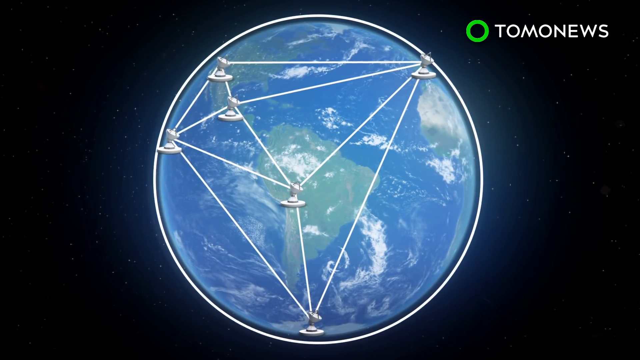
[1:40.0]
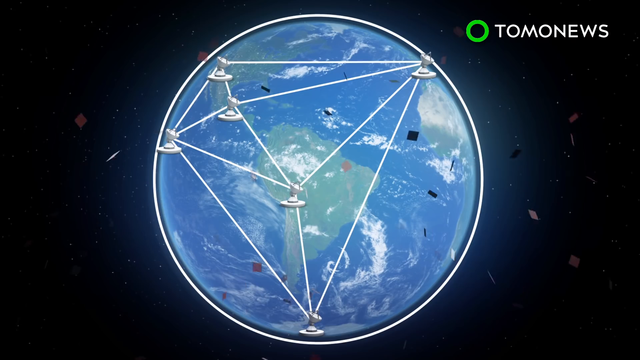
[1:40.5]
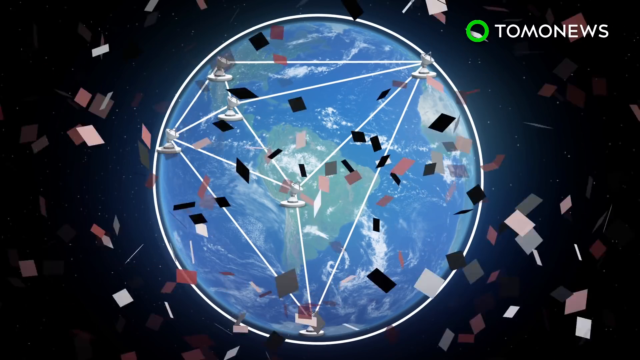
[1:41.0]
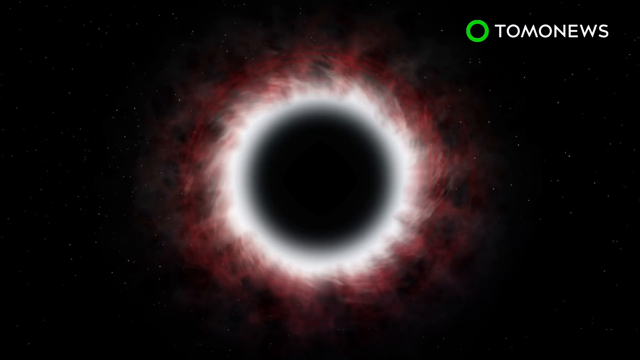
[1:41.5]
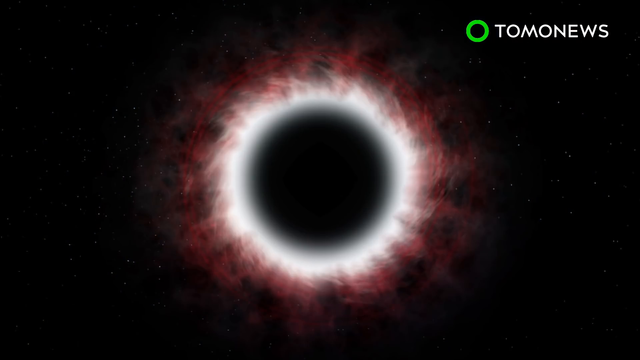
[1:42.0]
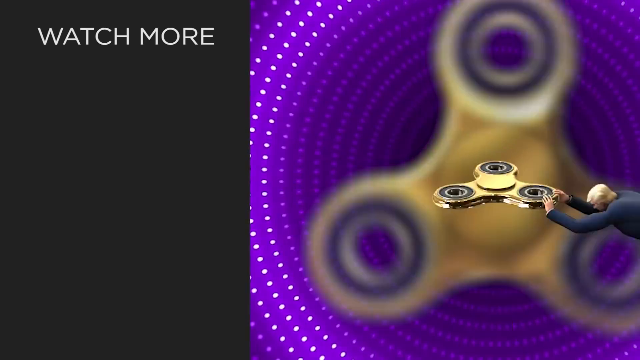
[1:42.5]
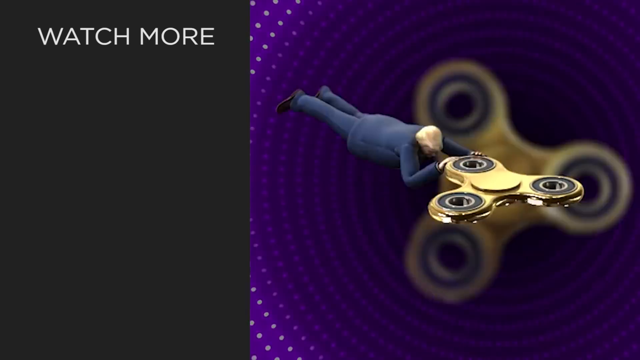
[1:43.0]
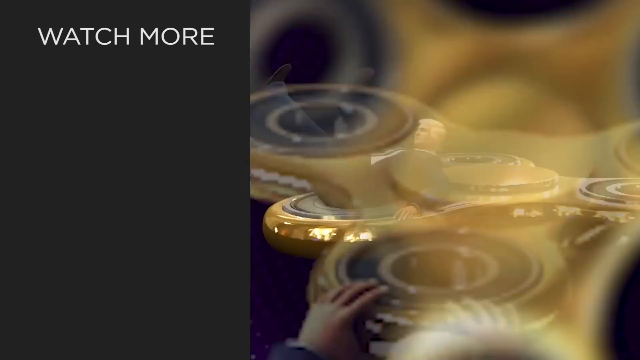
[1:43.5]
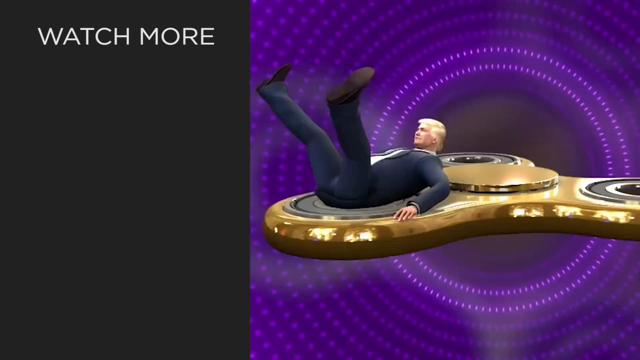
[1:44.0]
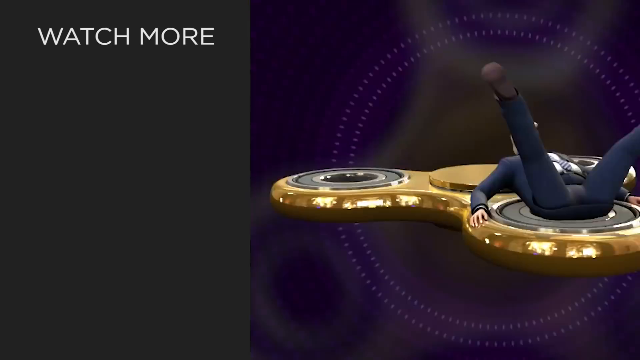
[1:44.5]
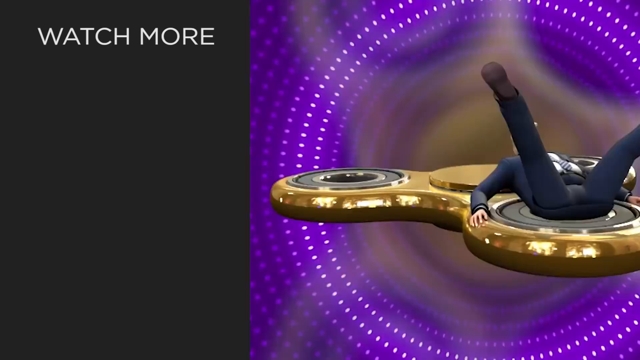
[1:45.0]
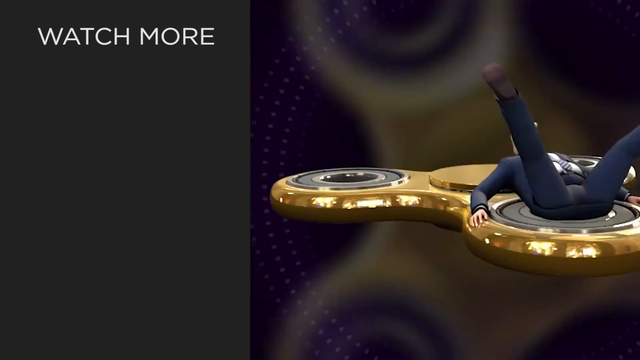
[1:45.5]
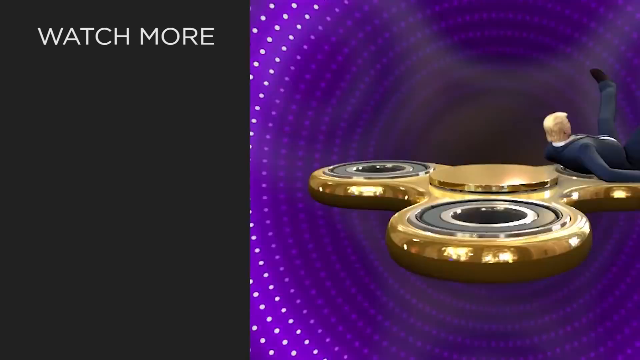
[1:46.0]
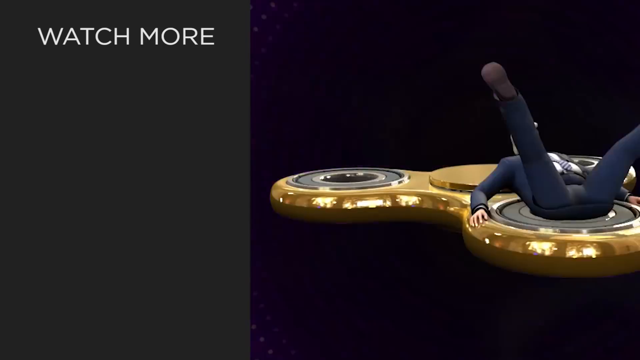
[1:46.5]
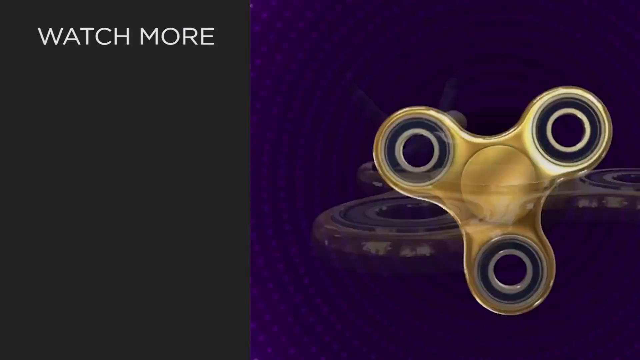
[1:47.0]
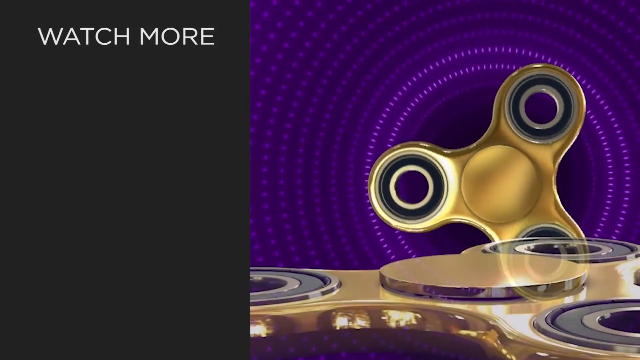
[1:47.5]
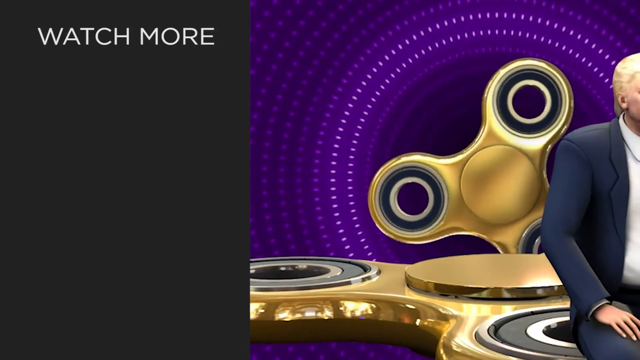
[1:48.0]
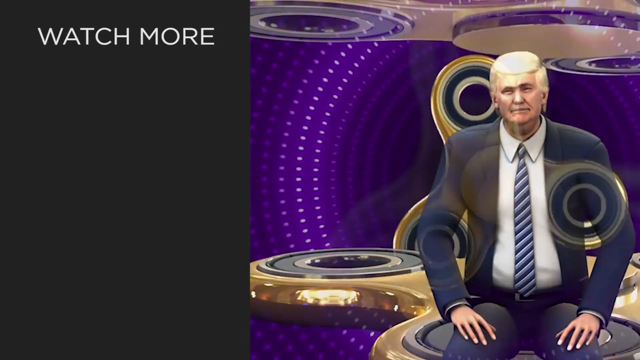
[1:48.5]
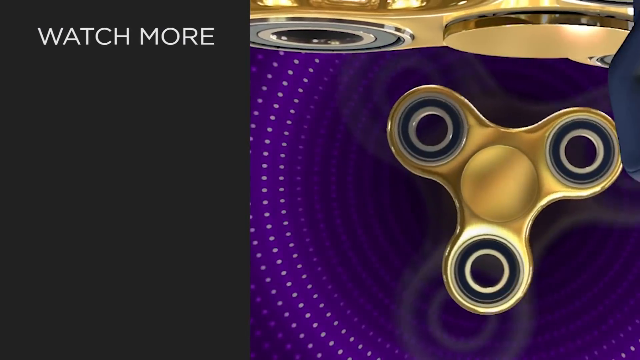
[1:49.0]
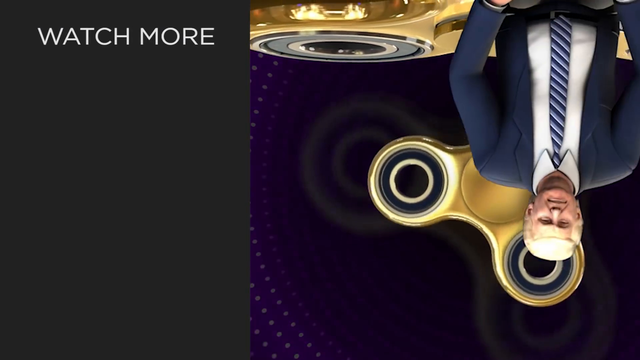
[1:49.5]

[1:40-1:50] Text reads "watch more". A man in a suit appears, changing places and turning upside down; he seems to be the one reporting on what is happening. The Earth is shown with many satellites, along with clouds.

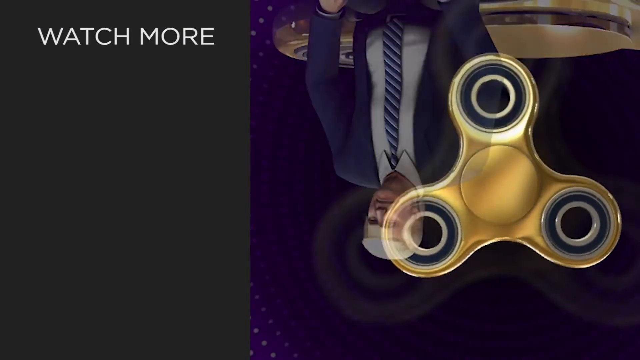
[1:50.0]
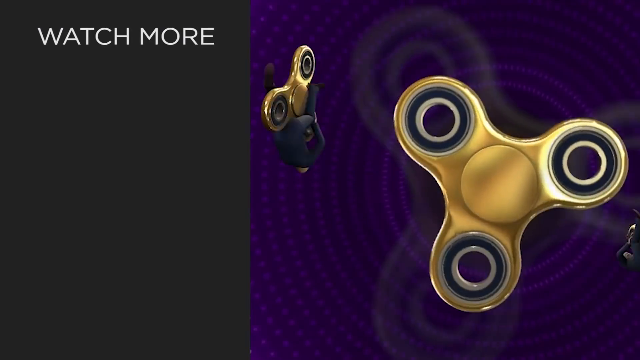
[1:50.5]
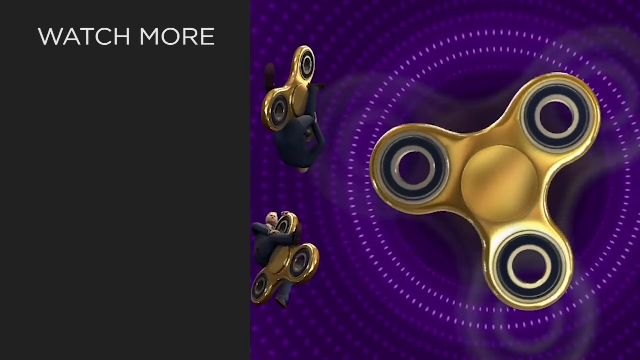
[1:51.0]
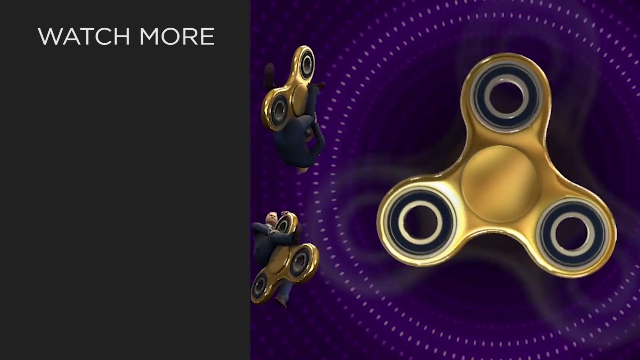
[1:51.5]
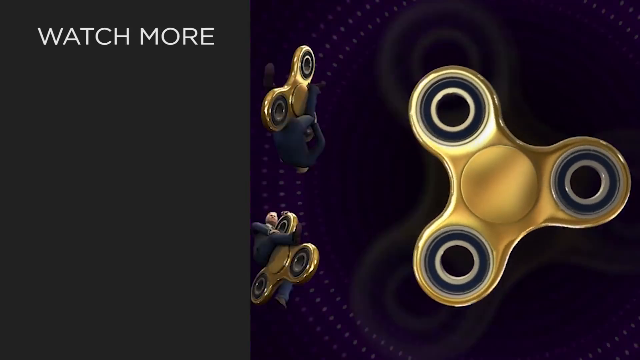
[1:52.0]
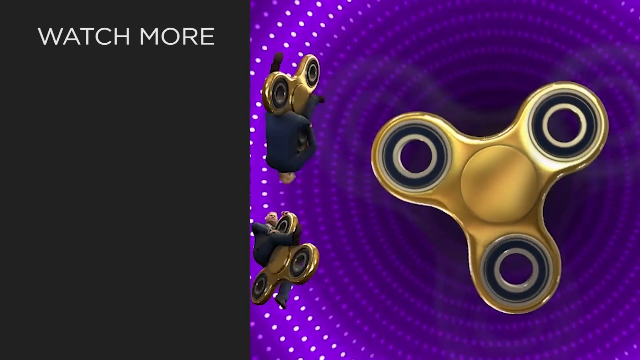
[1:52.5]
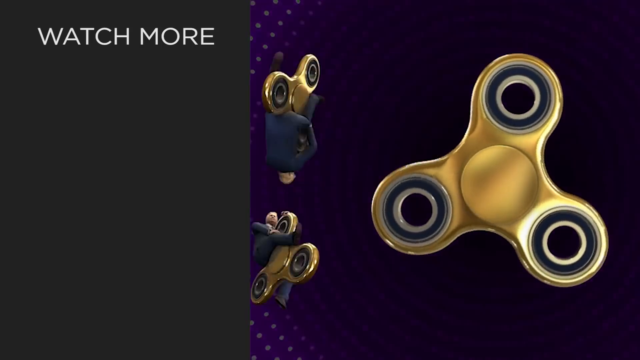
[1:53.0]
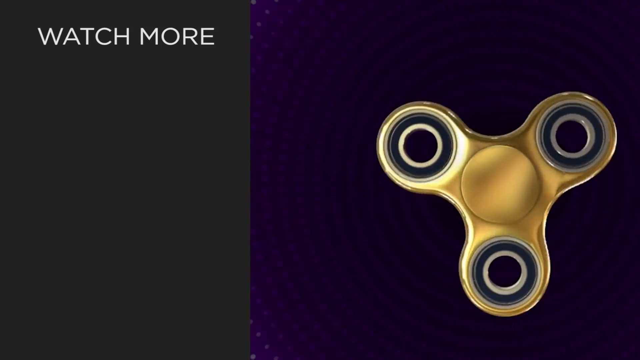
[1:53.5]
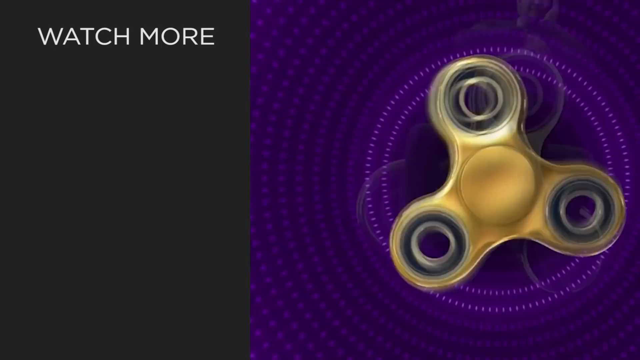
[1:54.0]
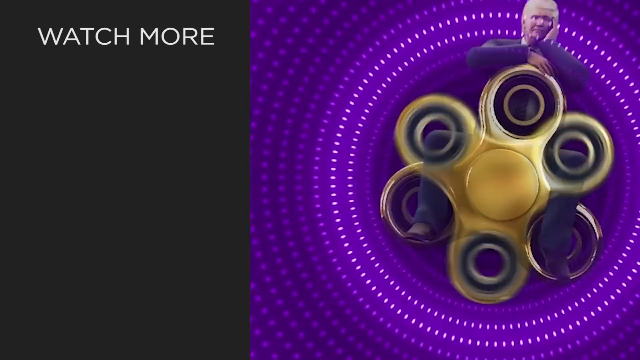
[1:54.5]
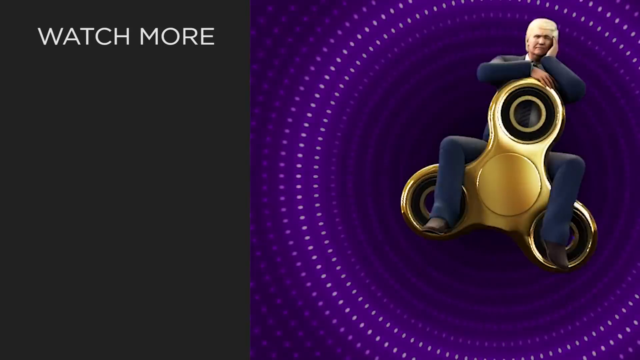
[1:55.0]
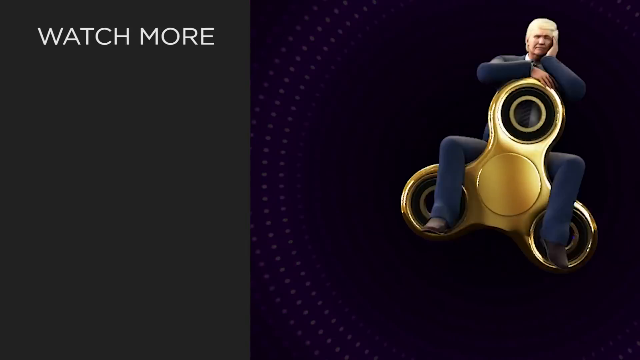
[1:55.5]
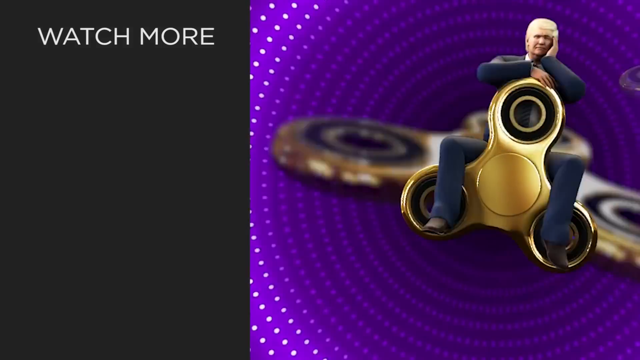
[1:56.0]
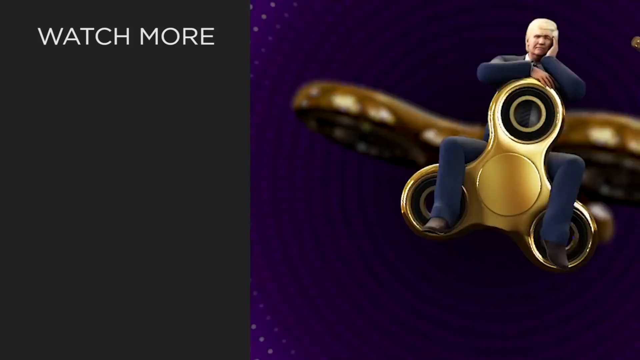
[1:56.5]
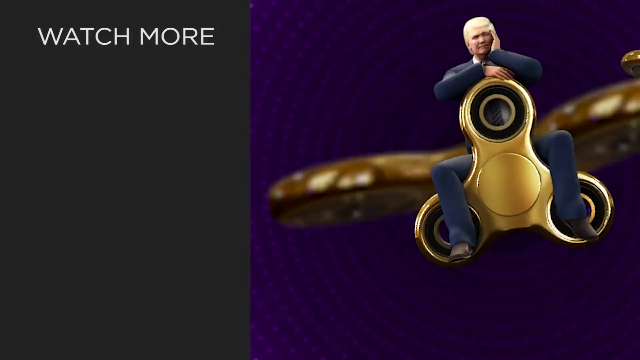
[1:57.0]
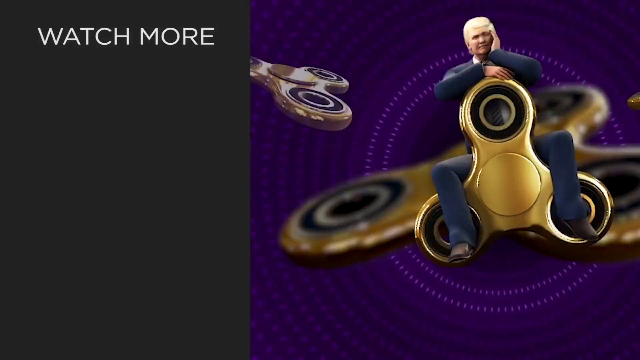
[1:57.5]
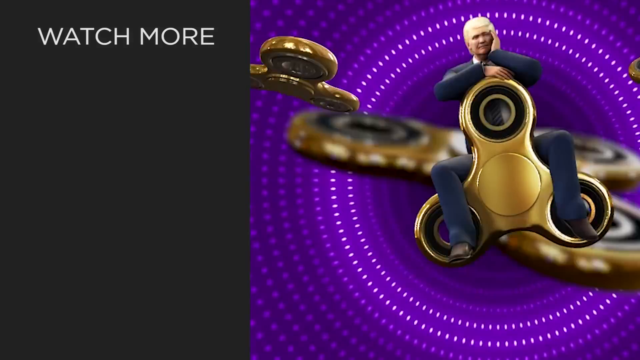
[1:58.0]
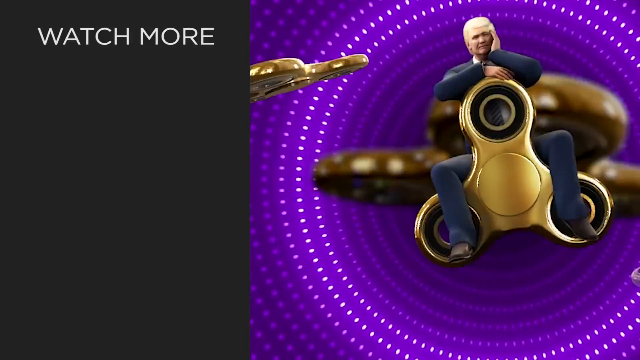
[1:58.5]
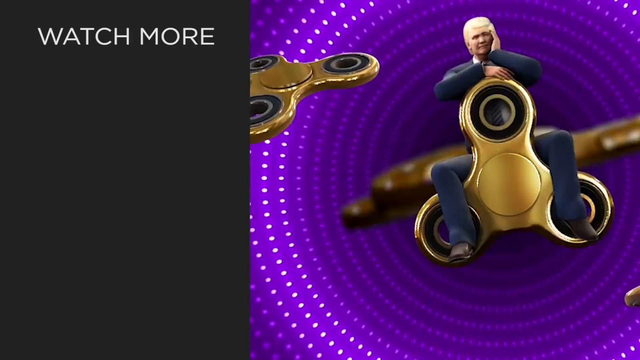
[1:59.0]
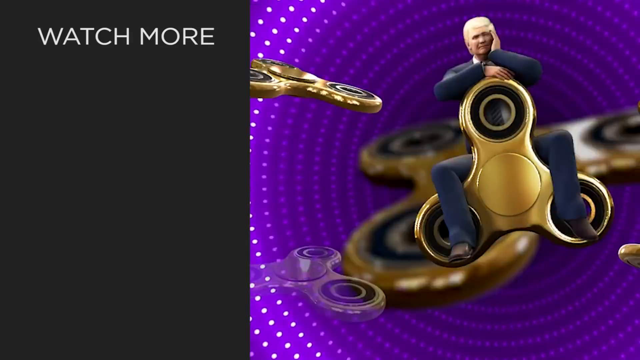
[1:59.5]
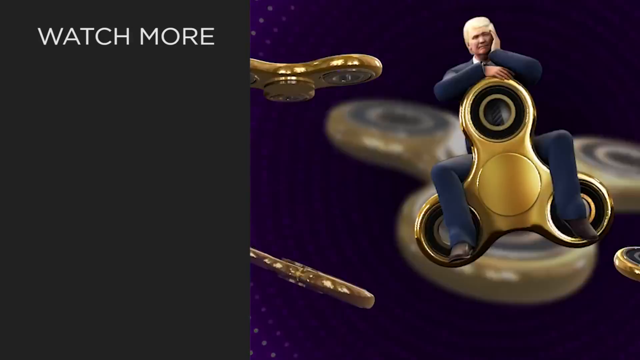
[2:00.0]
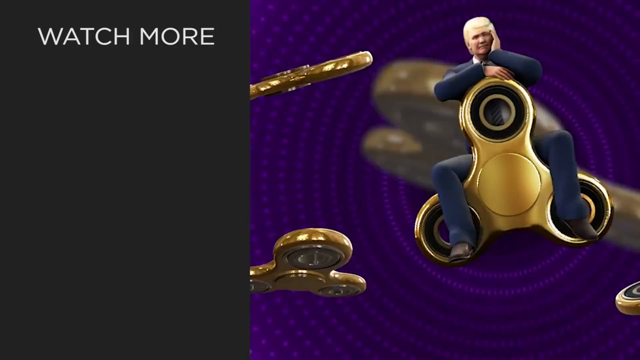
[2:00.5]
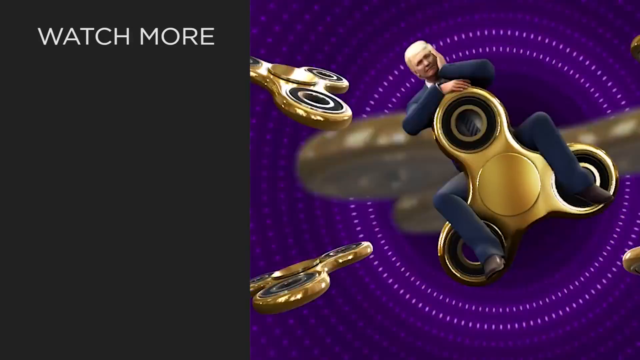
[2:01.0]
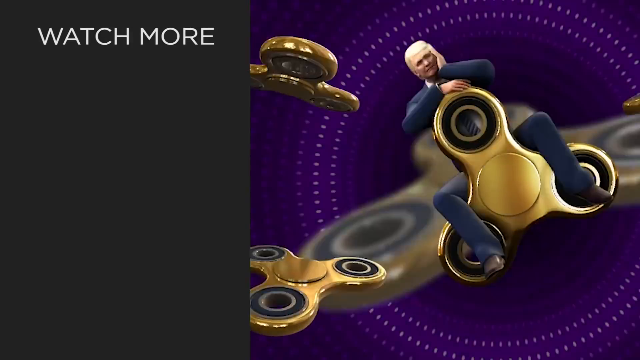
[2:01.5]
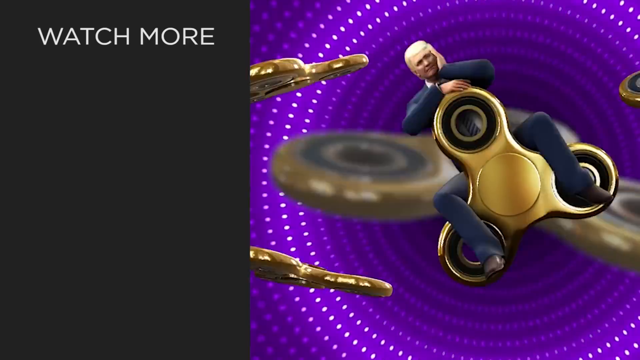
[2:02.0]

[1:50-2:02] Waves follow the Moon as it turns around, with many movements. The Earth appears with many satellites corner to corner. The Moon shows strange colours: the center is black with white around it, and the whole surface is black, gray and red. The Earth appears to be falling down.